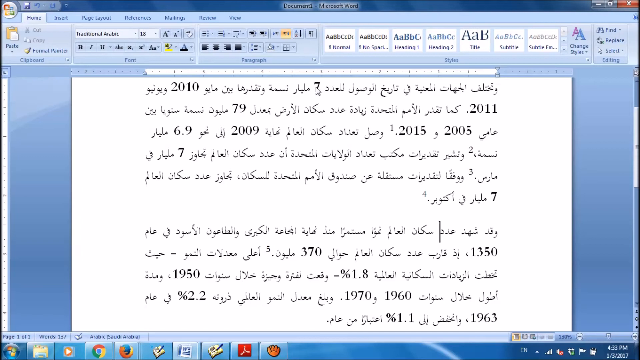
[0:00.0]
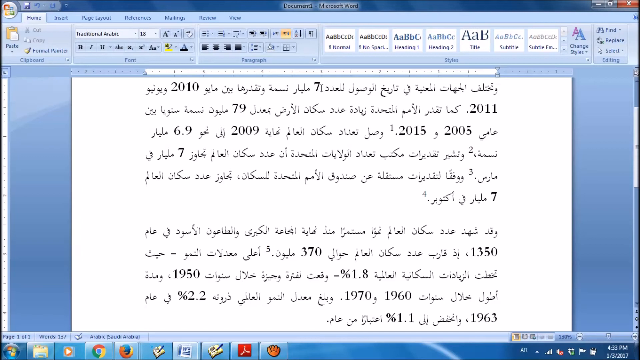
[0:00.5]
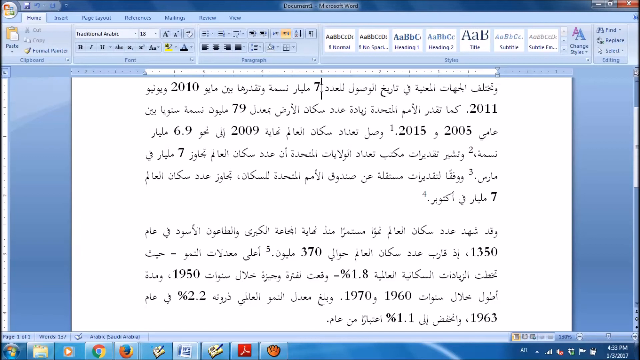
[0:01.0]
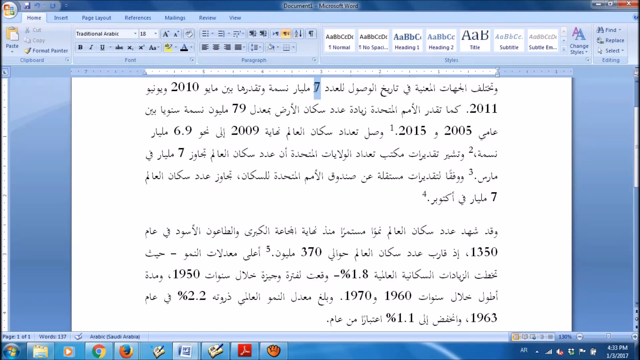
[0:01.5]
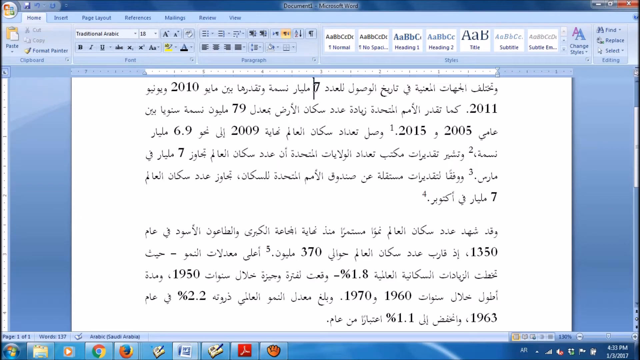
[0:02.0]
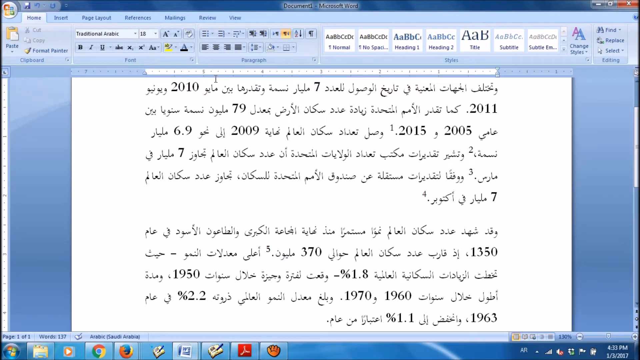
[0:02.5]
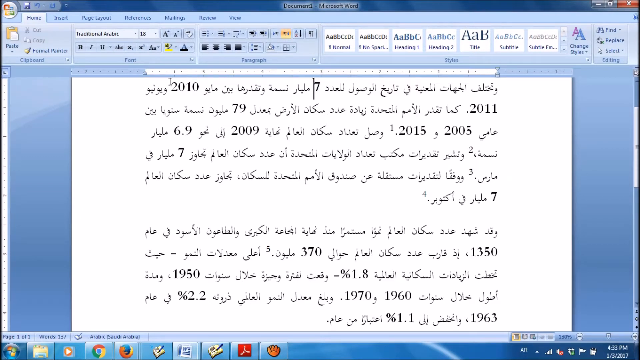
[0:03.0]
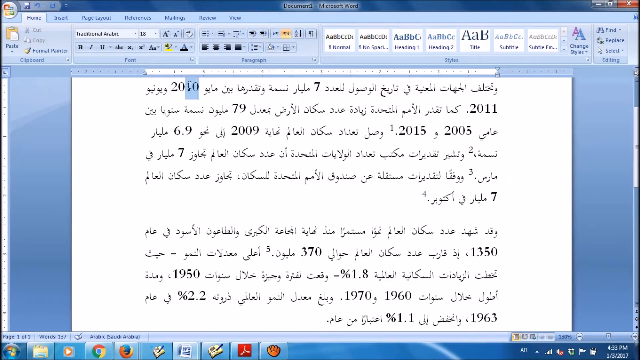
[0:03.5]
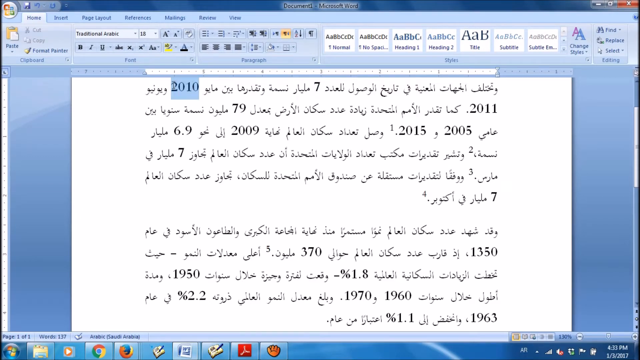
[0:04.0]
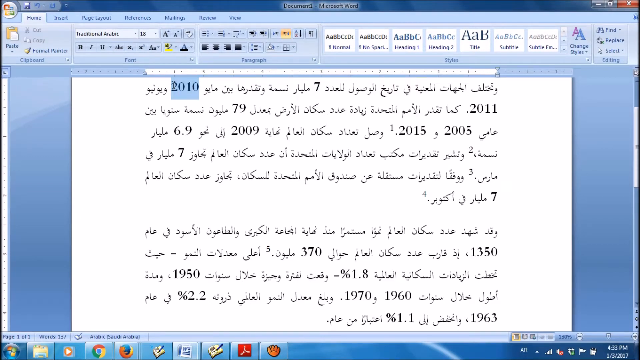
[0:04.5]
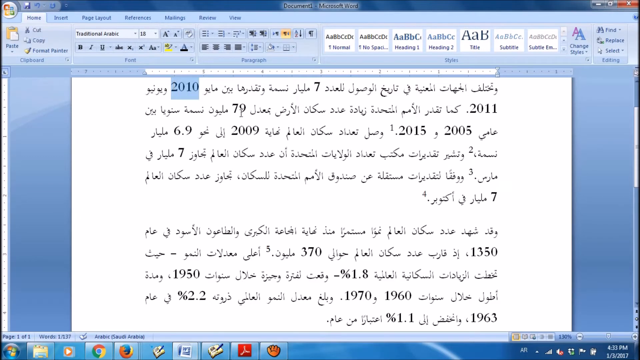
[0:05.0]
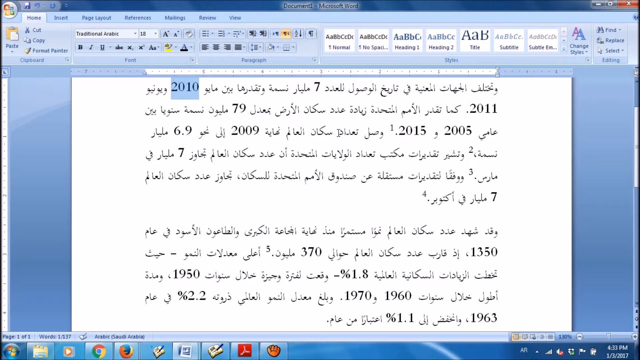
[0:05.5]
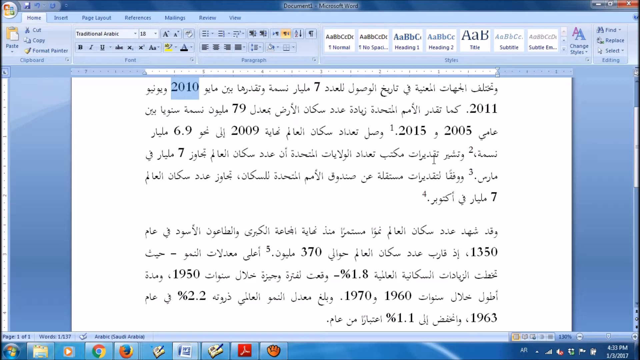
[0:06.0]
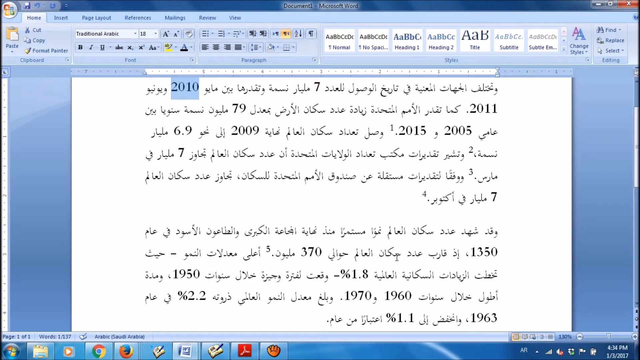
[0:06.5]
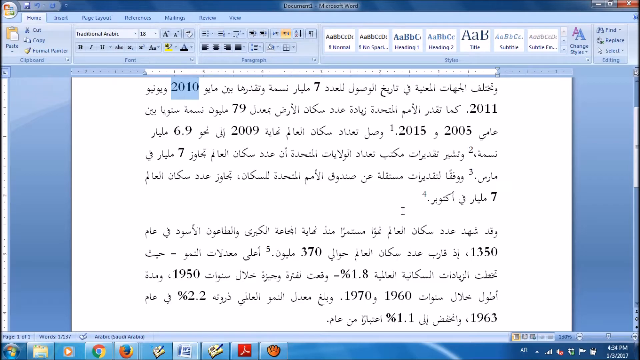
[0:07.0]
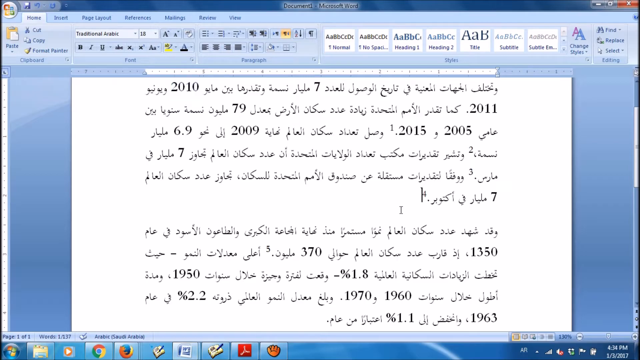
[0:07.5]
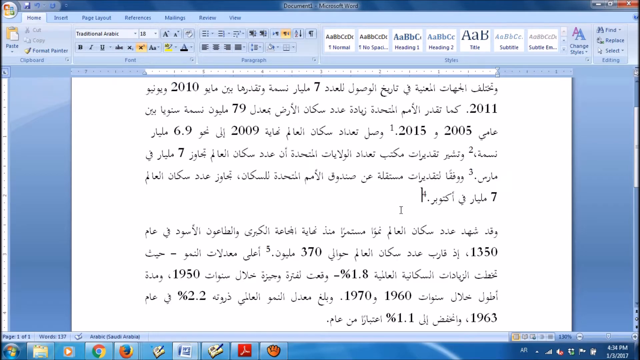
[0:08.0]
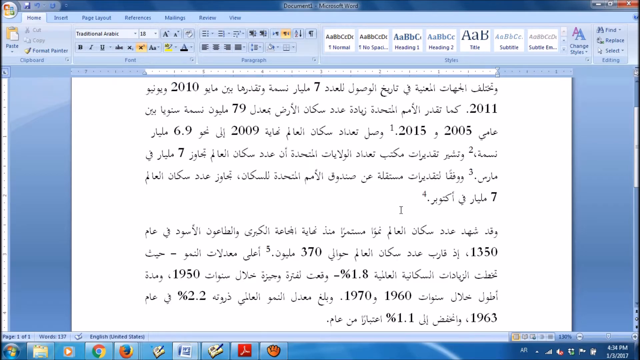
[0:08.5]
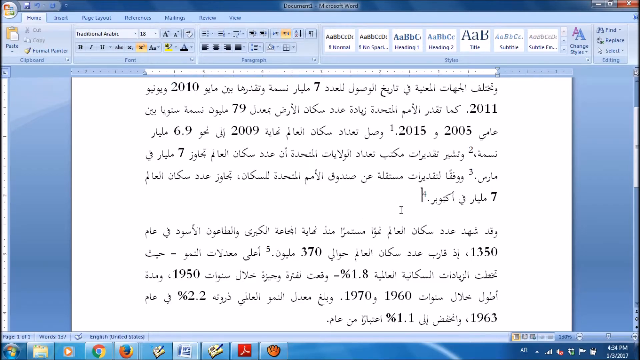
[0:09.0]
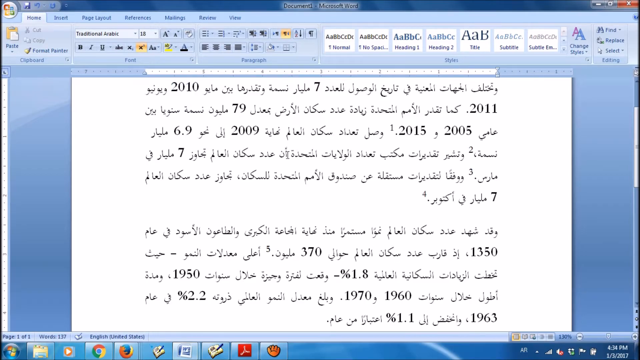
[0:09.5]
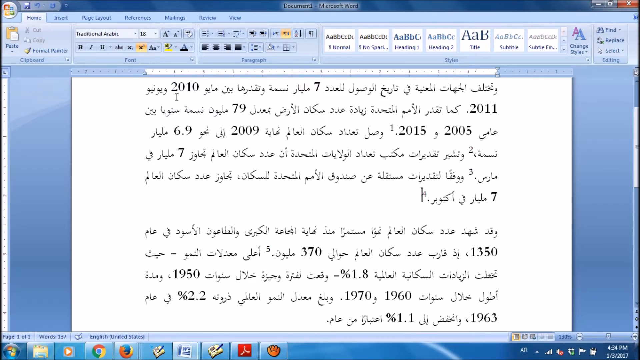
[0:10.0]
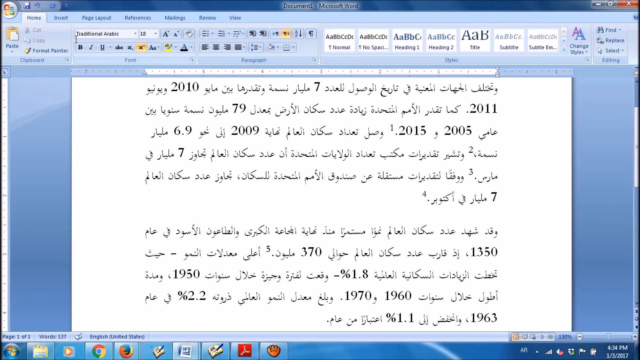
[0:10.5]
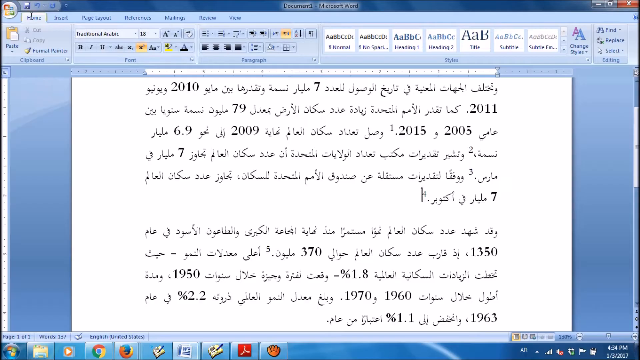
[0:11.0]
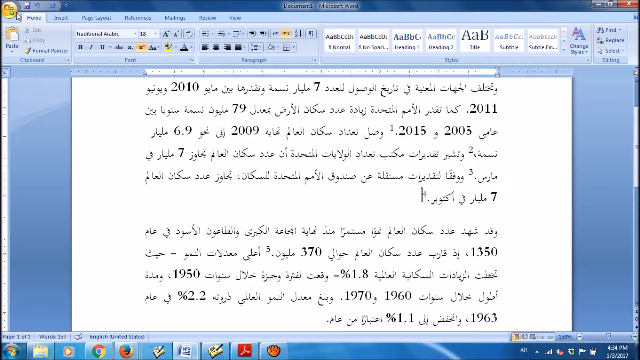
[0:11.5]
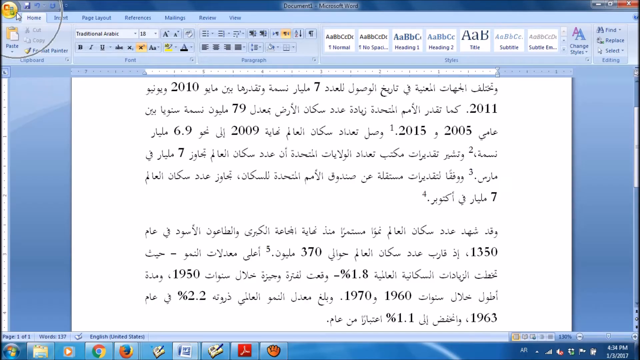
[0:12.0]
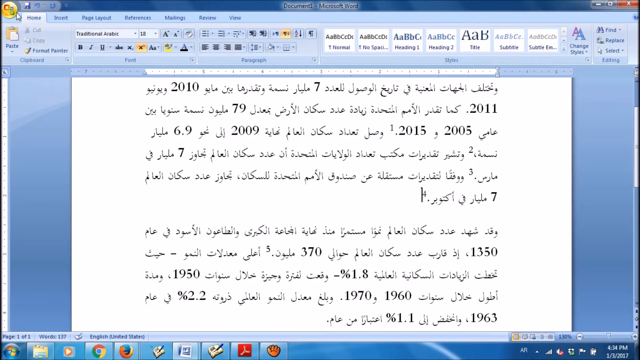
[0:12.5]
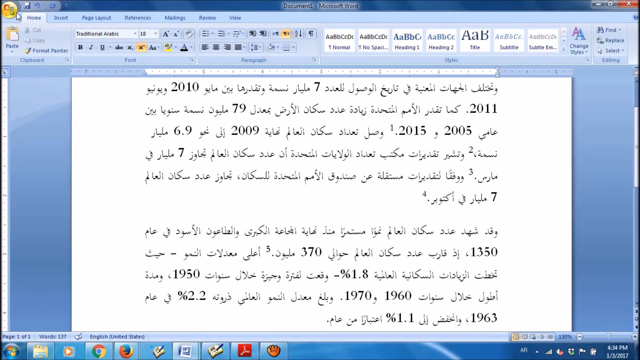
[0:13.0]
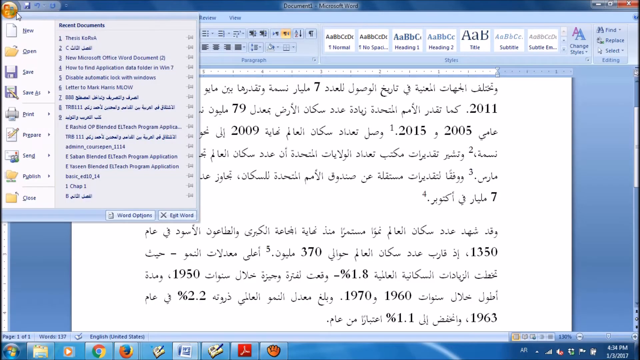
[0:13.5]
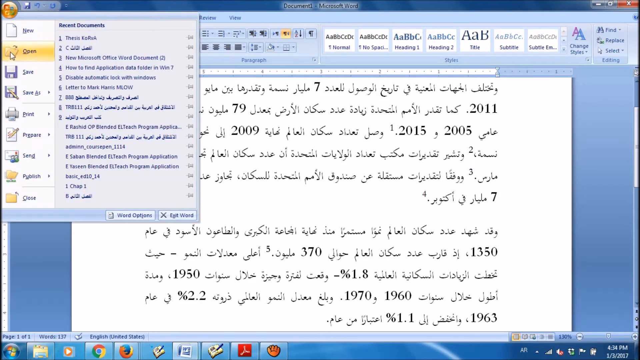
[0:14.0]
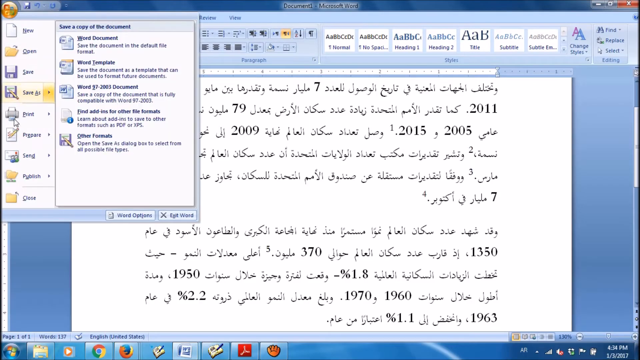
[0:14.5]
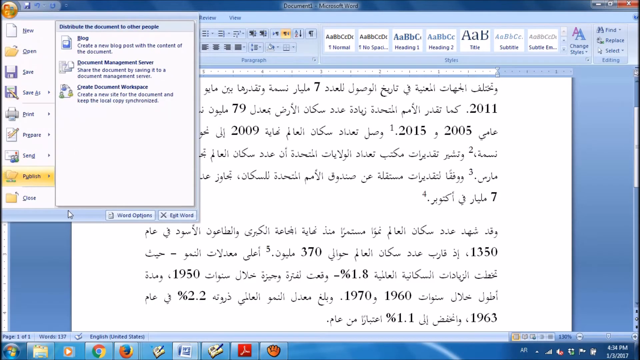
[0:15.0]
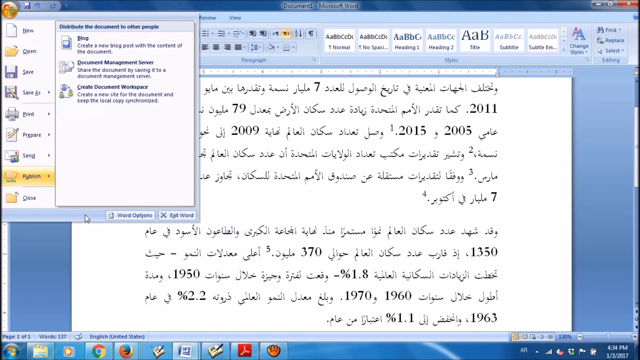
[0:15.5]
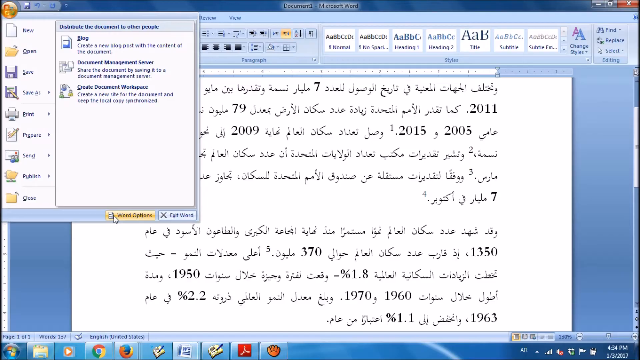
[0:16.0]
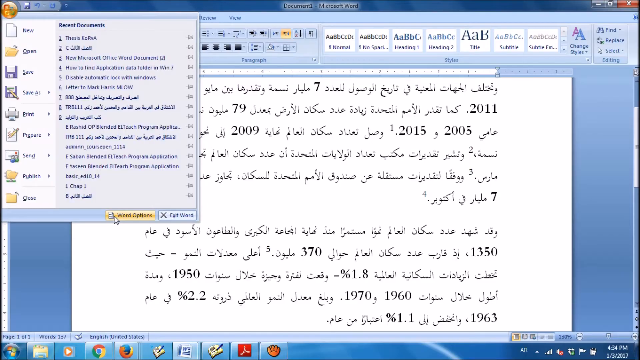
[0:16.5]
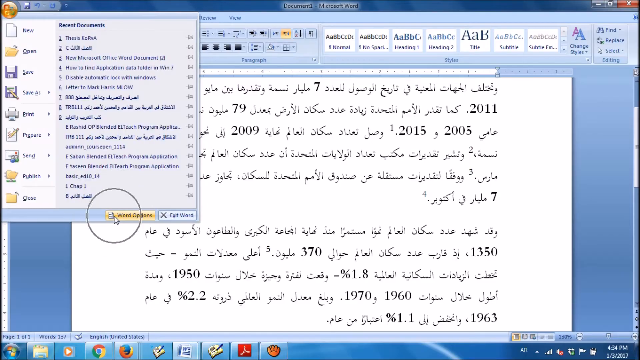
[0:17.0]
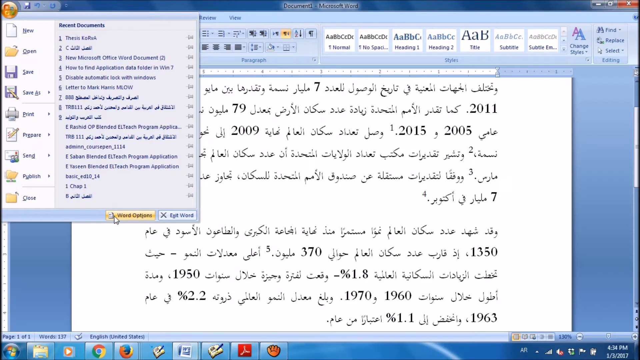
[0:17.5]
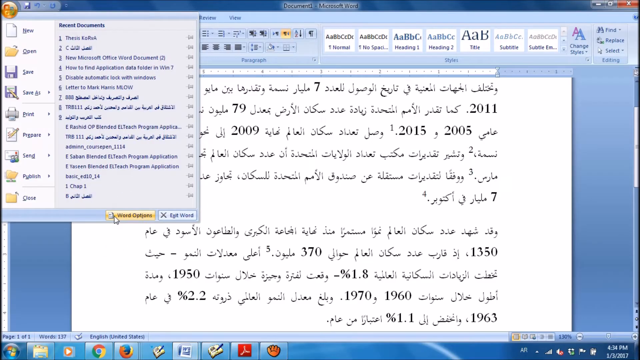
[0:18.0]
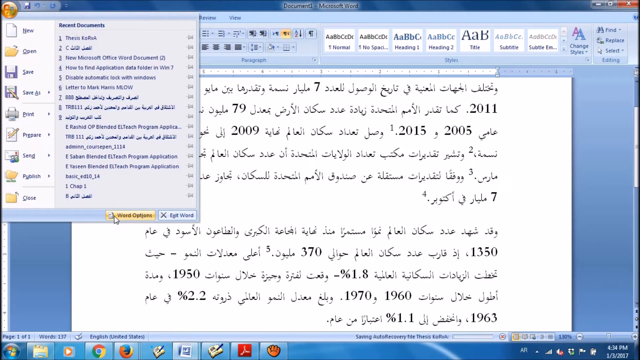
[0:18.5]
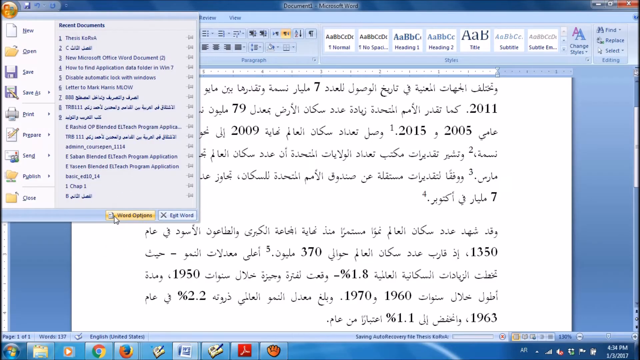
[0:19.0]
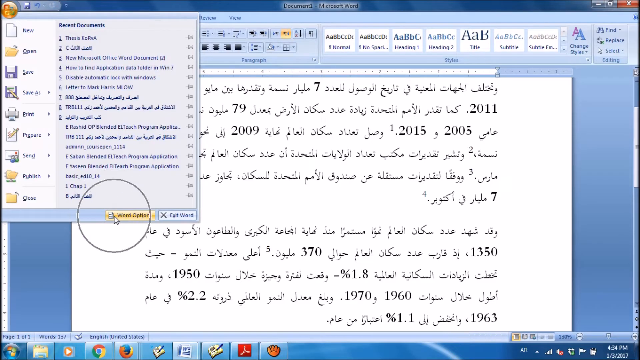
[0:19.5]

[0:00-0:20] Text in Arabic is on screen, along with numbers written in English: 2011, 778, 2005, 1350, 370, 307, 01 and 50. Some sentences are also written in English.